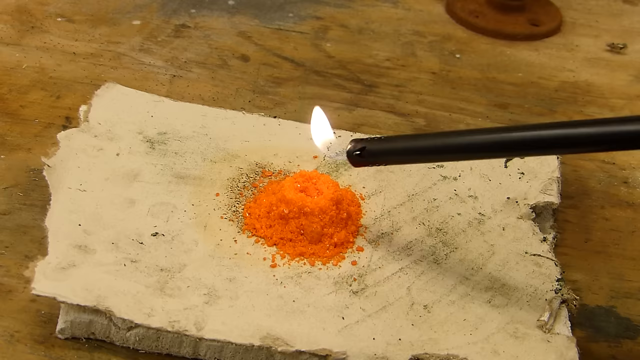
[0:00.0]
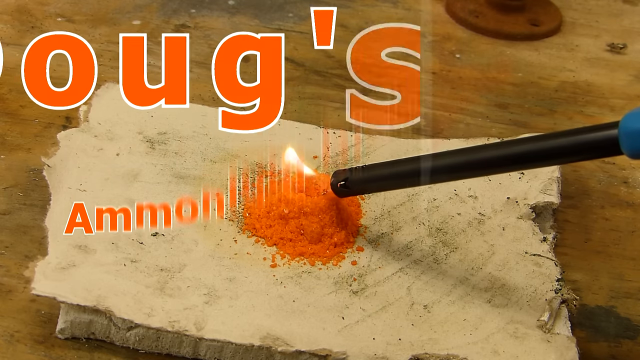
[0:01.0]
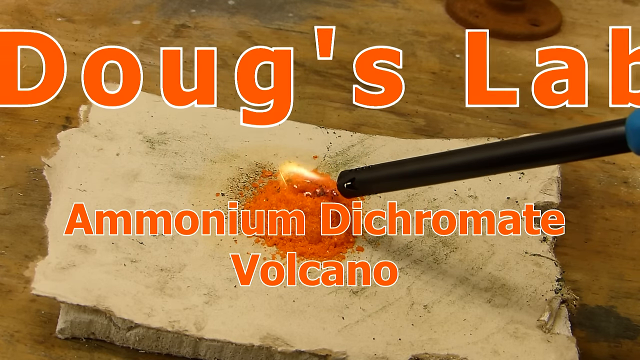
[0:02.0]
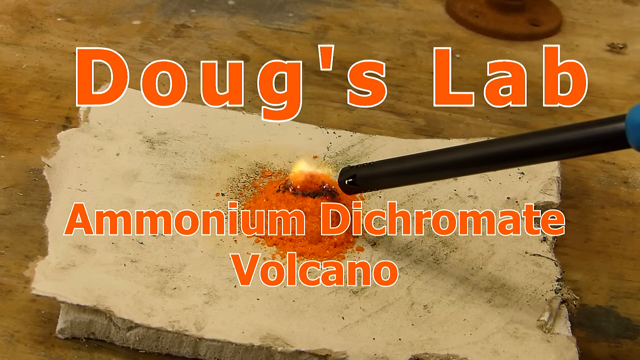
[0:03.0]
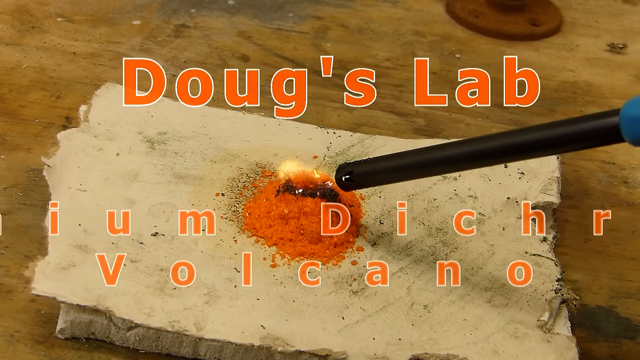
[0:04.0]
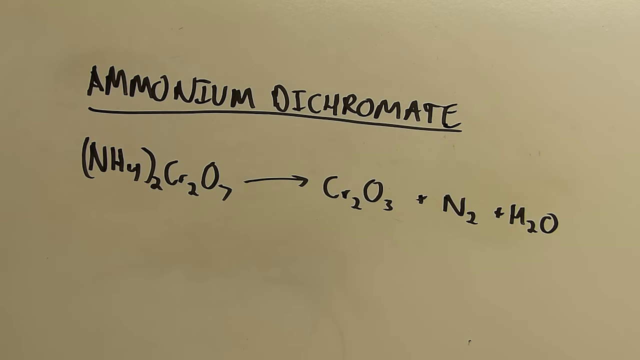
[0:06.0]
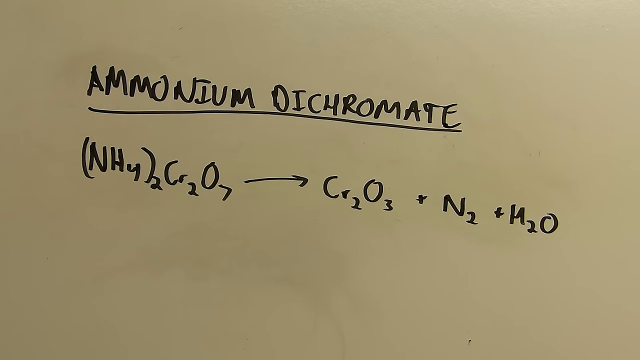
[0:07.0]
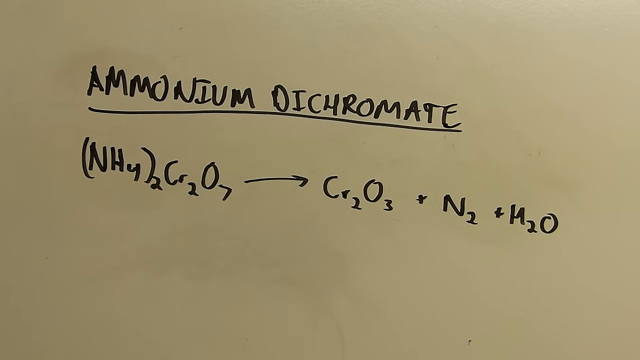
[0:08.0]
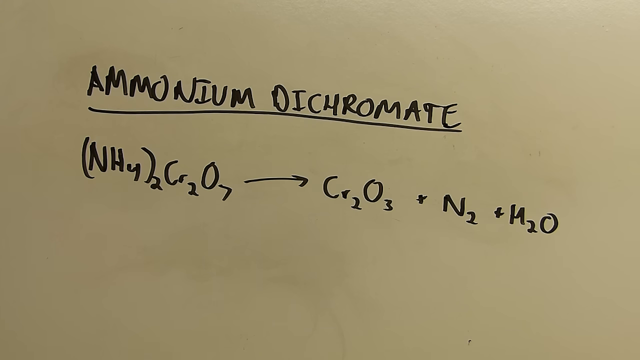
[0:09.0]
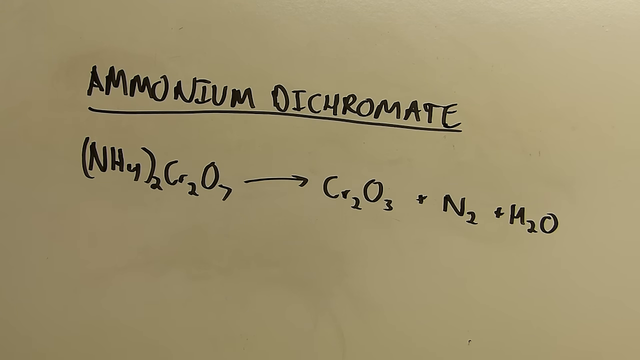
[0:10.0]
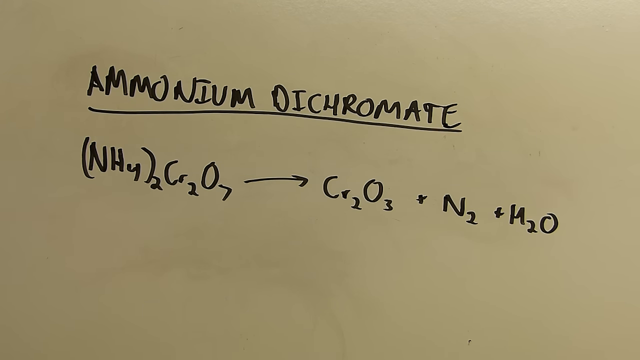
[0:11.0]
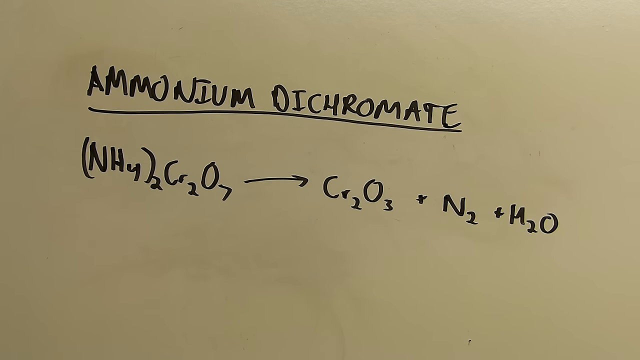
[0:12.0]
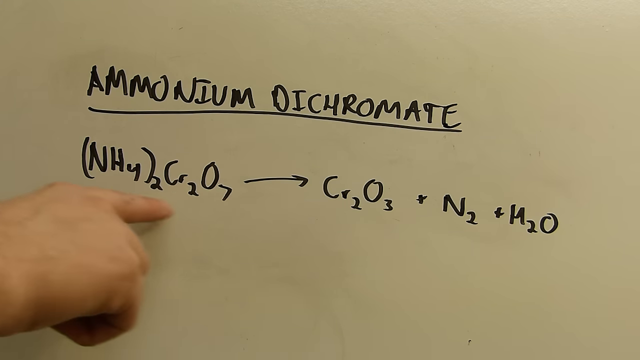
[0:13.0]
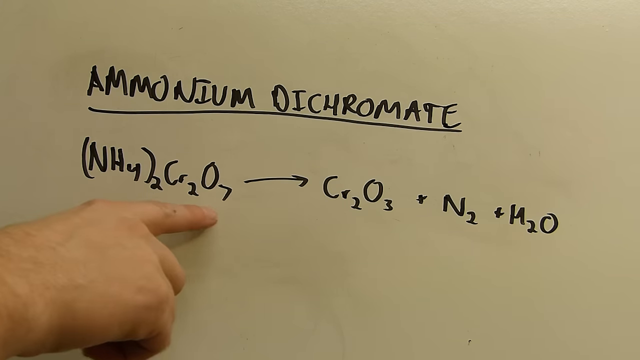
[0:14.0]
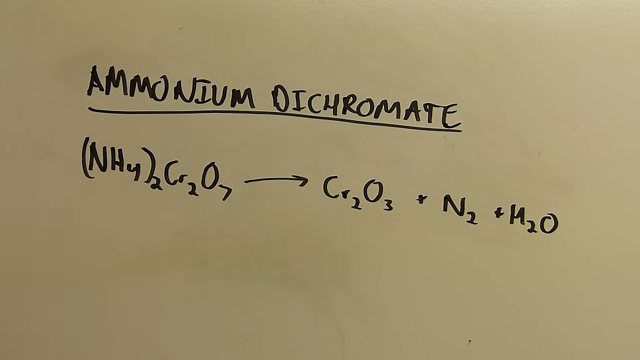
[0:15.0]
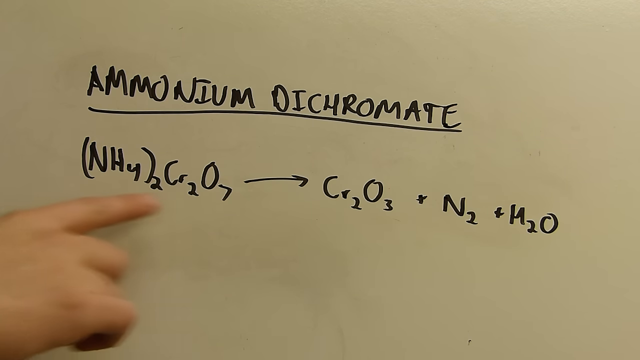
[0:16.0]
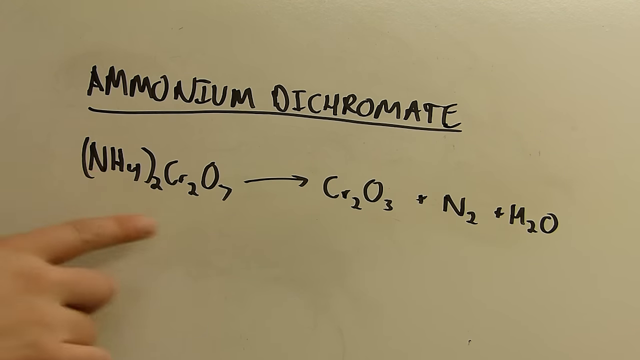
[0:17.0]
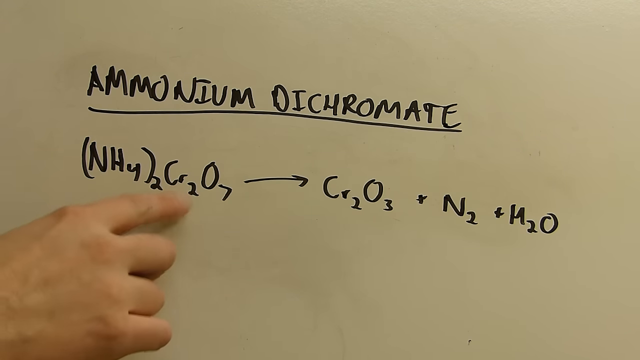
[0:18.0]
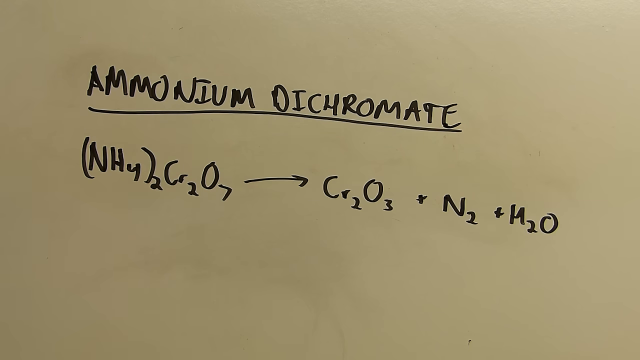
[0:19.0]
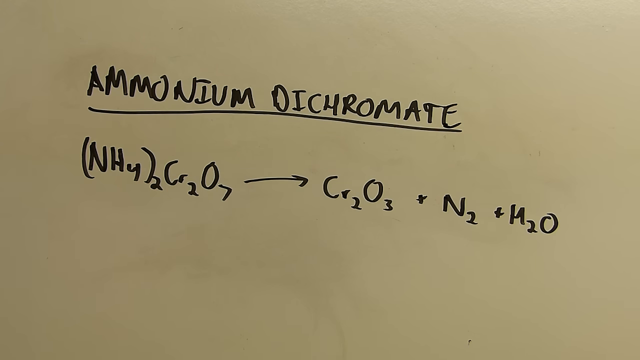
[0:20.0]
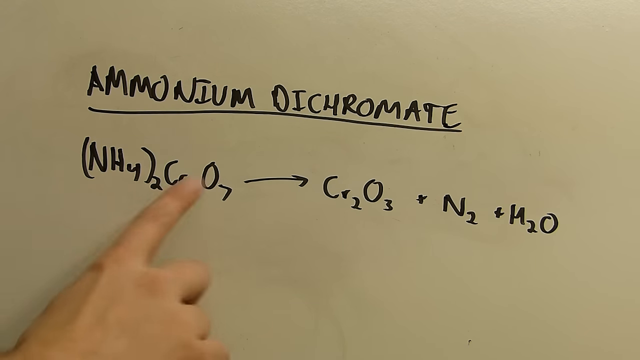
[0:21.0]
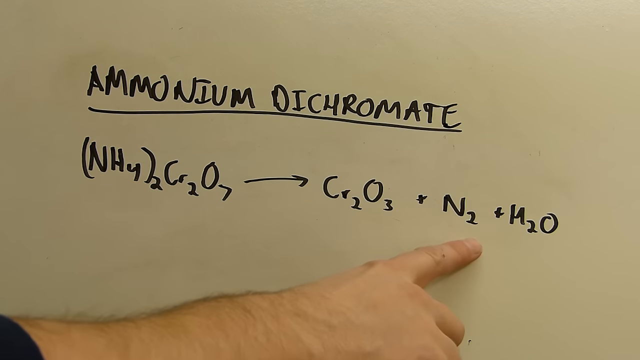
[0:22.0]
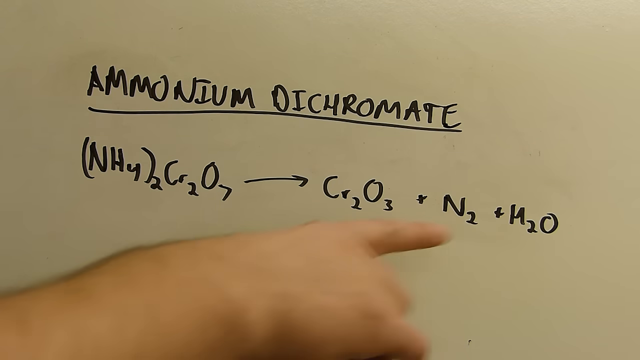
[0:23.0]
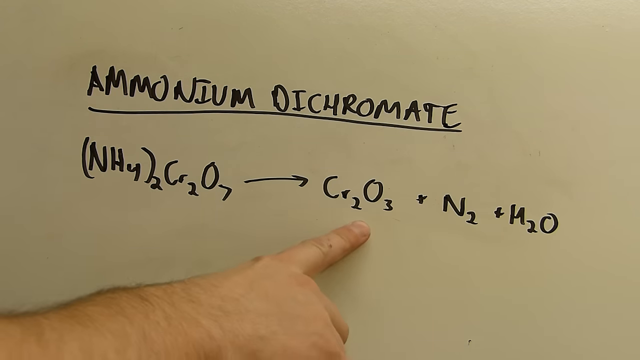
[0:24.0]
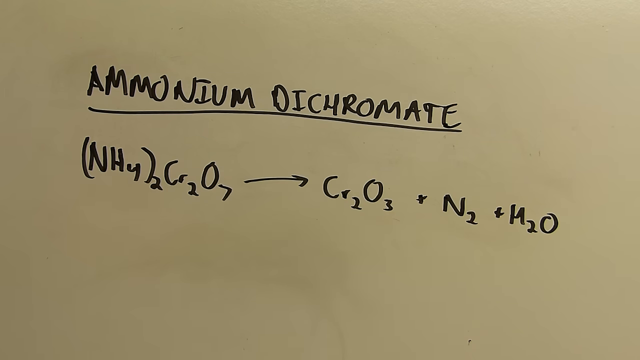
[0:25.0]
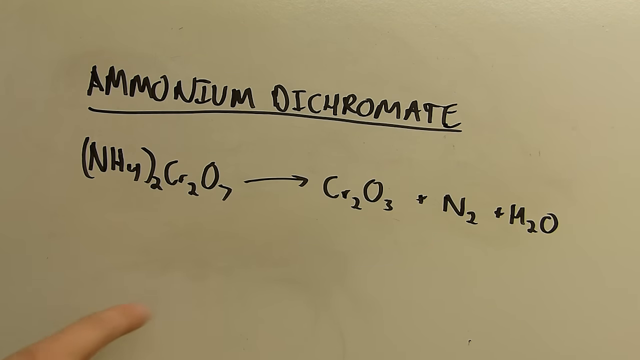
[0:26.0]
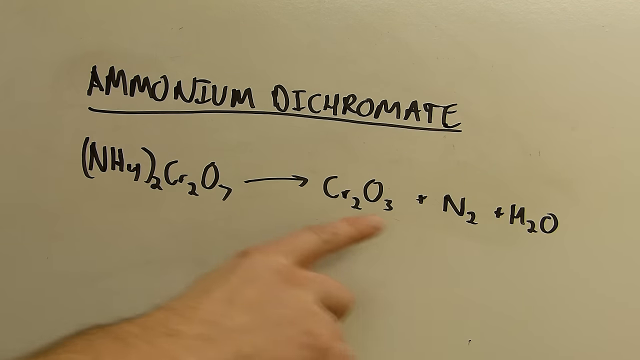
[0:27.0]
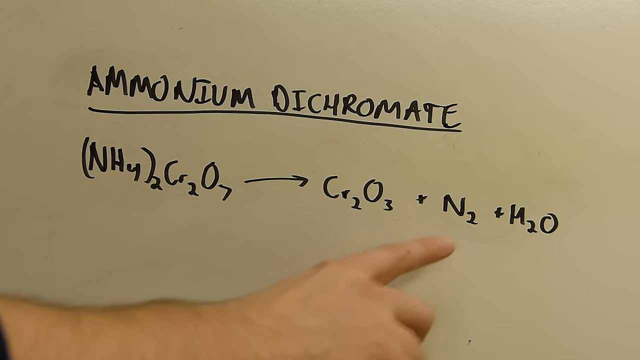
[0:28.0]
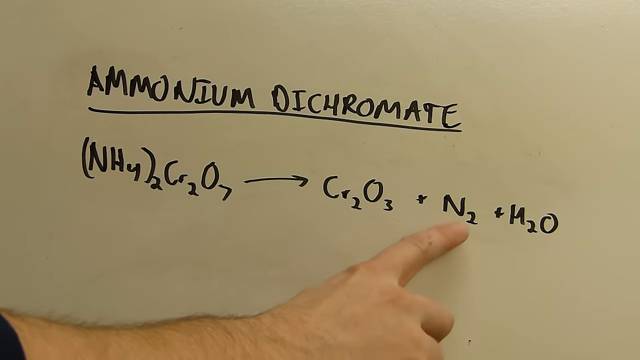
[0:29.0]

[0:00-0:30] On a distressed wooden-colored surface is a piece of white wood, almost rectangular in shape, with jagged edges on its smaller sides. On it is an orange pile of something like dust or rock. Someone lights a fire, with the fire source coming from the right side. Text reads "Doug's lab ammonium dichromate" and then "volcano". The fire is set into the pile, and the orange powder starts to turn brown. A white board shows "ammonium dichromate" underlined, with its chemical formula: (NH4)2Cr2O7, then an arrow to the right leading to Cr2O3 plus N2 H2O. A pointing finger on someone's right hand points to the chemicals before the arrow, then to all three chemicals after the arrow, starting with N2, and the finger keeps pointing at the N2.